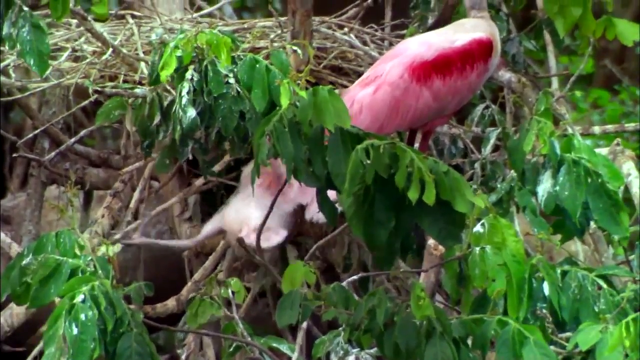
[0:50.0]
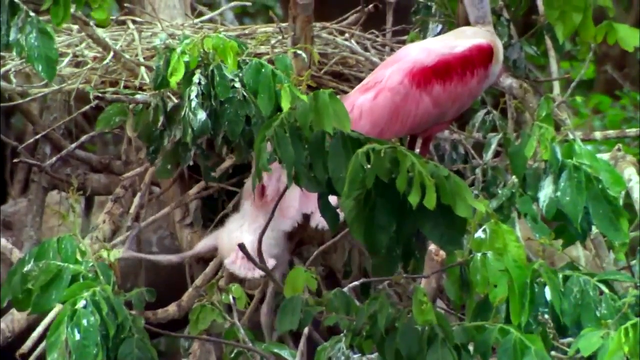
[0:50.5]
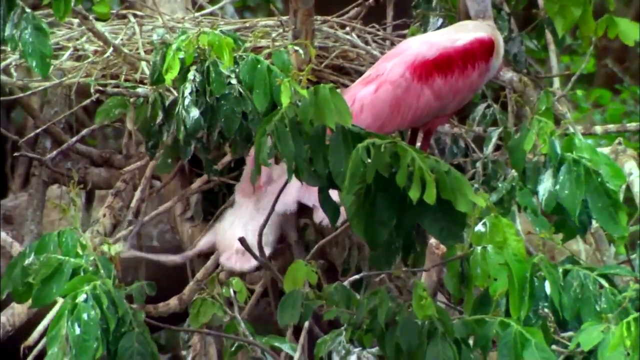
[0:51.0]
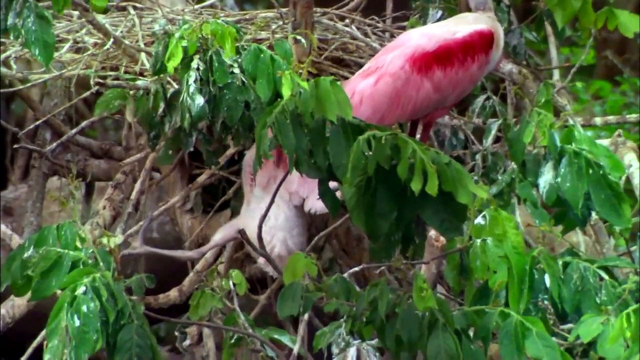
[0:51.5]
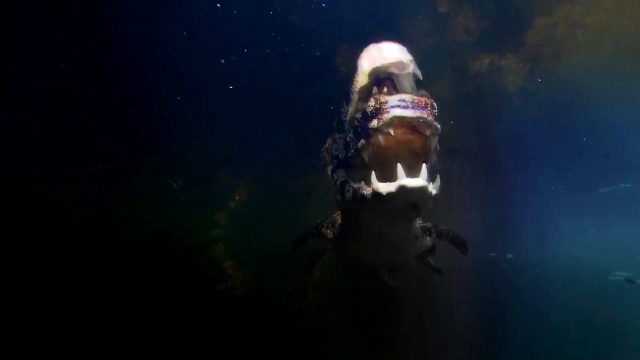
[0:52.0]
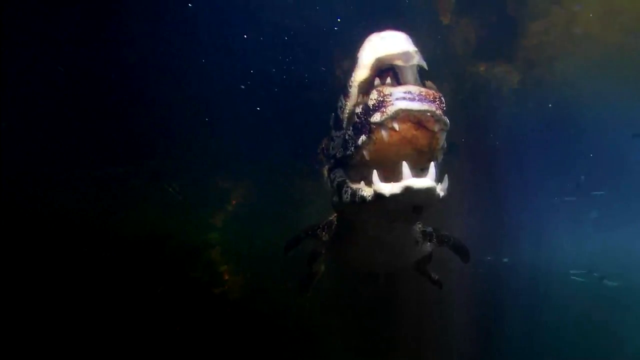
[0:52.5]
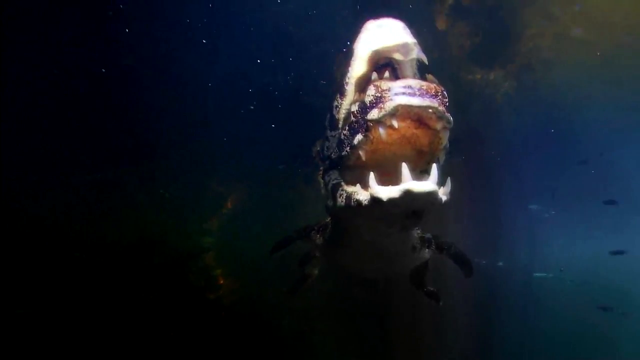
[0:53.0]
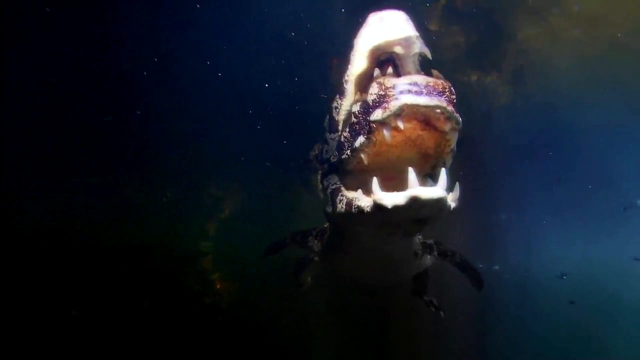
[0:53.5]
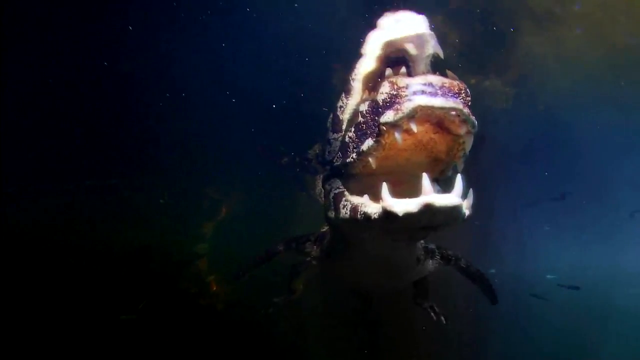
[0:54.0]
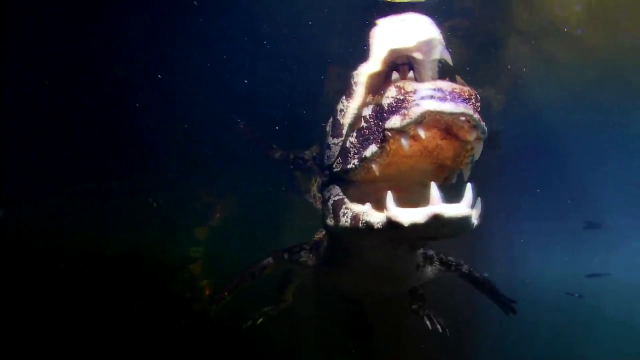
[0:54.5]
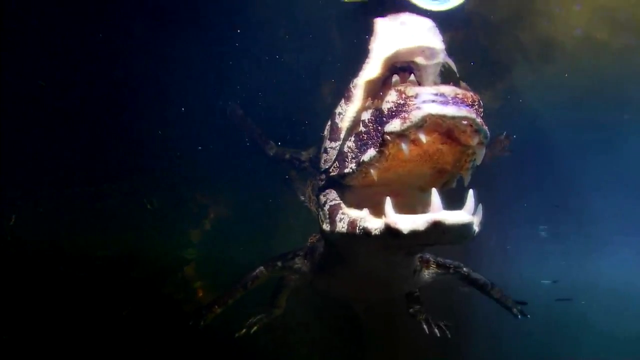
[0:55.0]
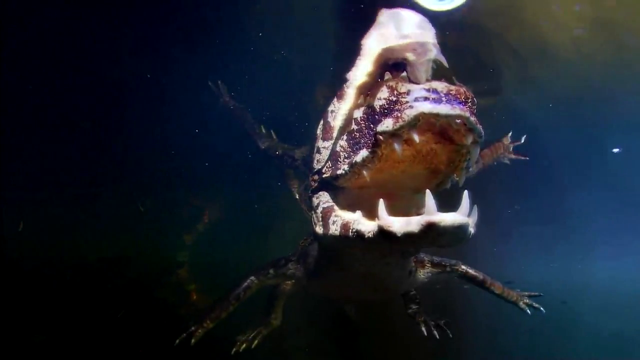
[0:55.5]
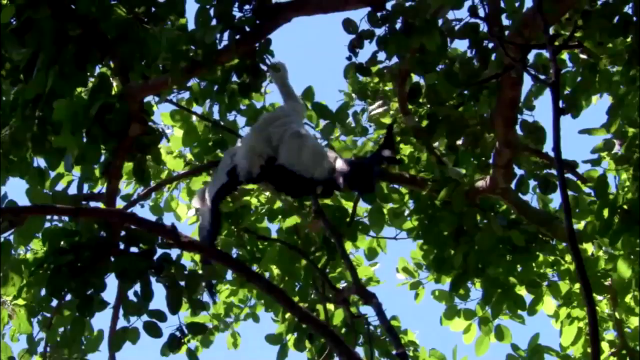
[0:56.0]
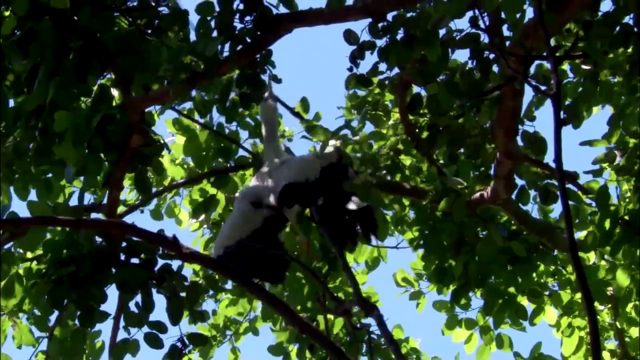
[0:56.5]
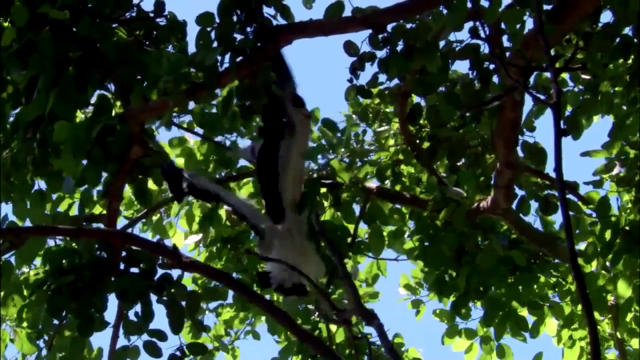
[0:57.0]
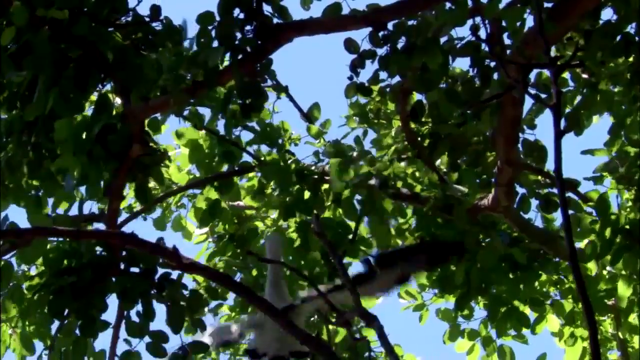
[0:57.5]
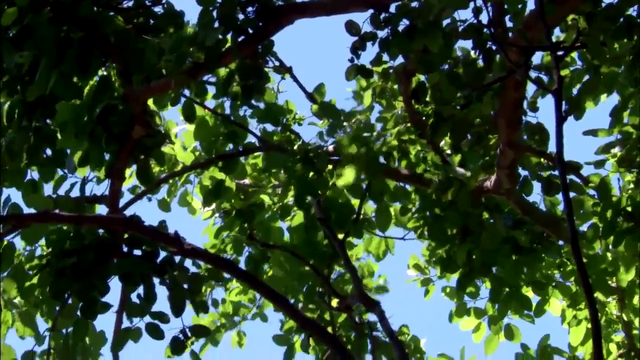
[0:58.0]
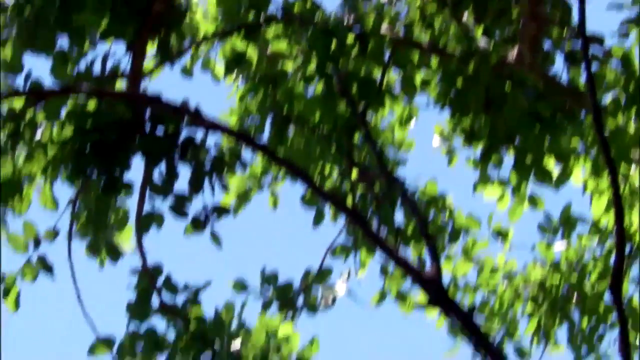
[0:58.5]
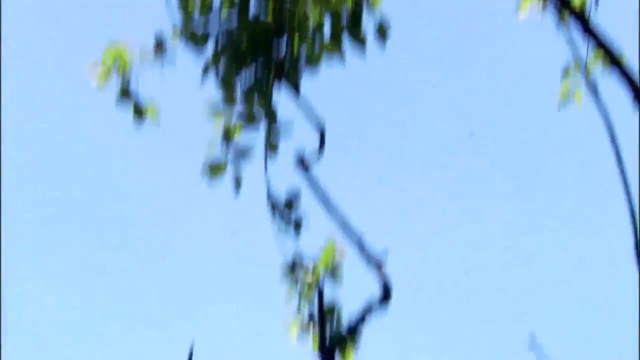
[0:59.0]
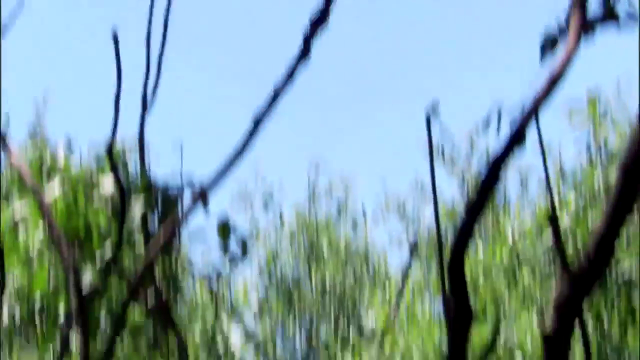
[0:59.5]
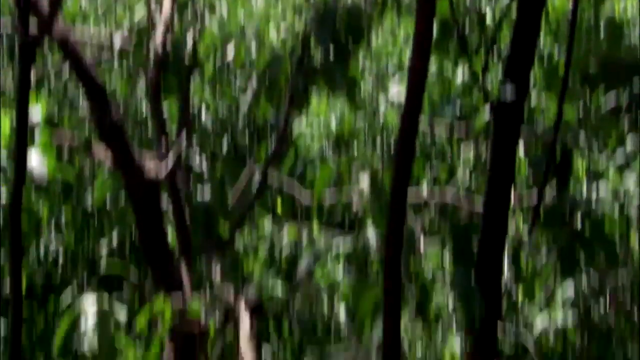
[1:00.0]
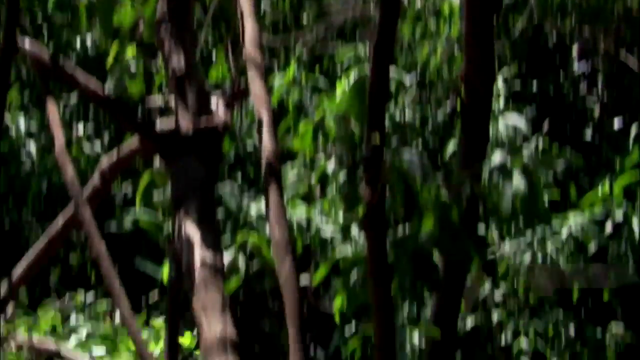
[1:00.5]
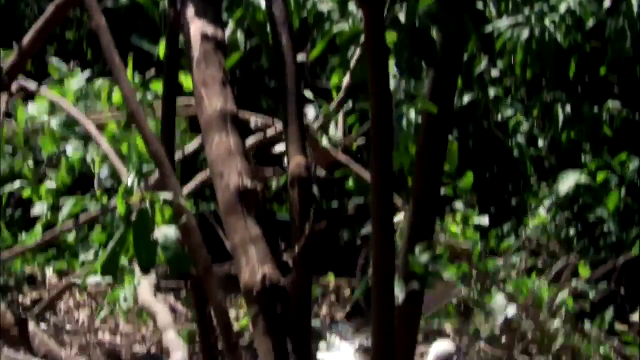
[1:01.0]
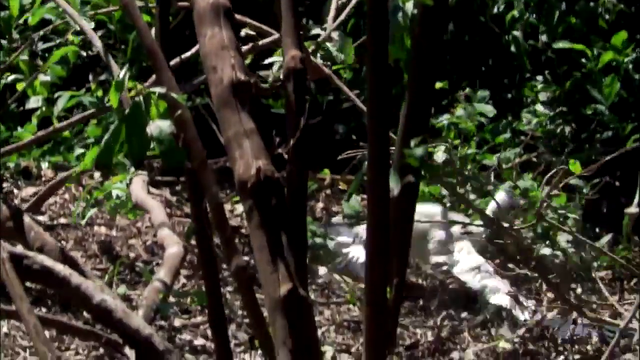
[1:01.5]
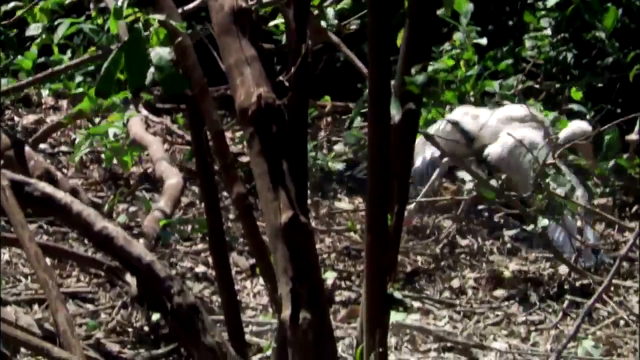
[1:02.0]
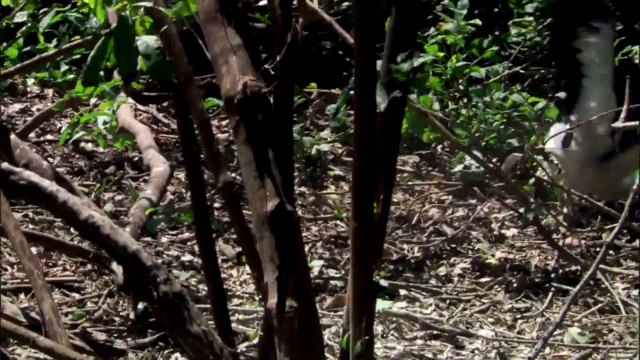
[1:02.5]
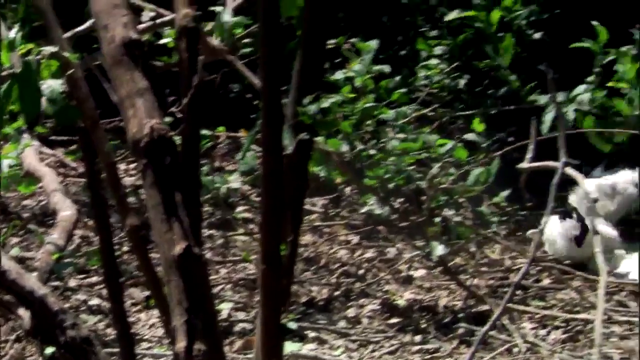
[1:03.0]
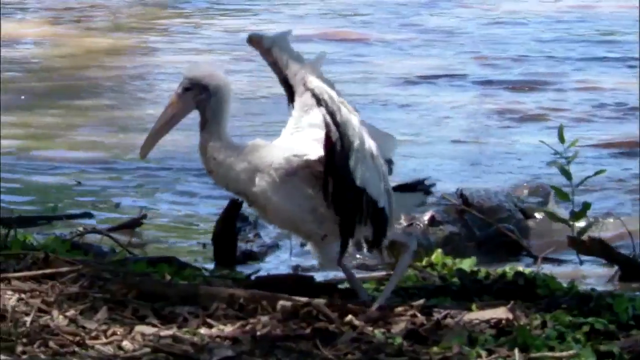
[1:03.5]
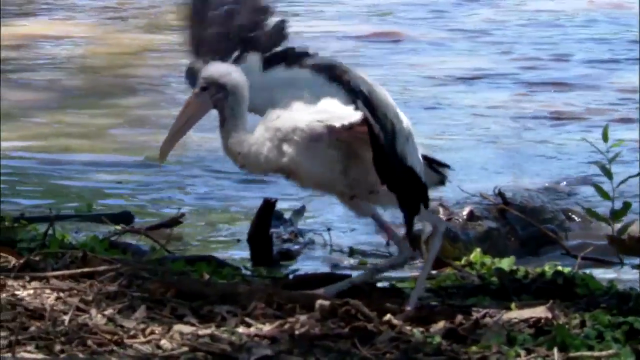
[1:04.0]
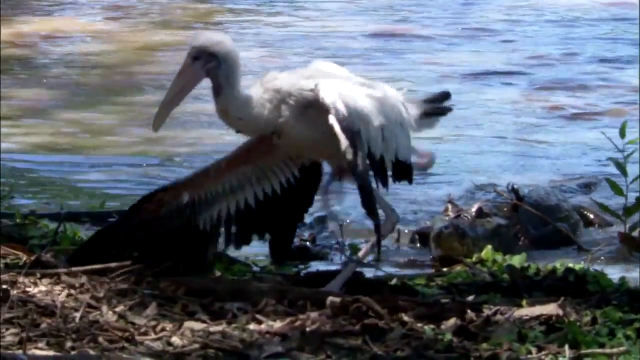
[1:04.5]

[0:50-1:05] Deep water appears with an animal in it, which turns out to be a crocodile. A bird falls down from the trees and then tries to stabilise its movement, which seems difficult for it. Just at the side of the water, a crocodile is on the water, and the bird is just in front of it.